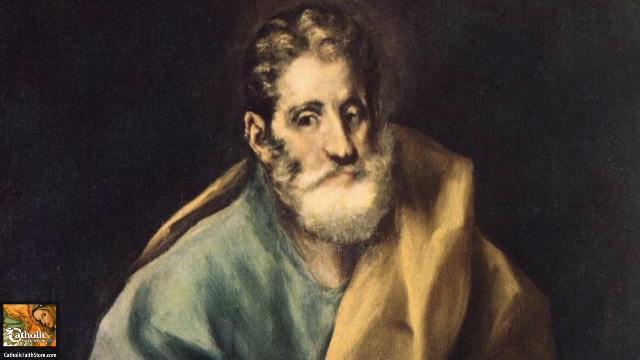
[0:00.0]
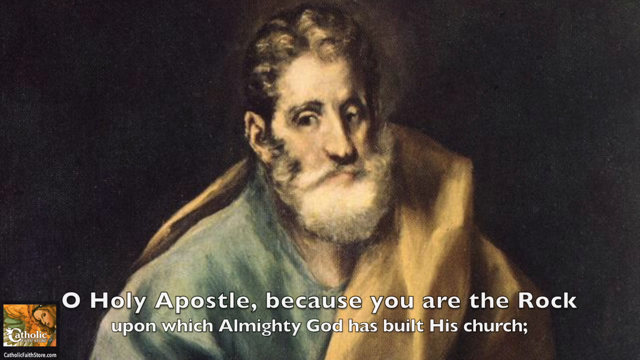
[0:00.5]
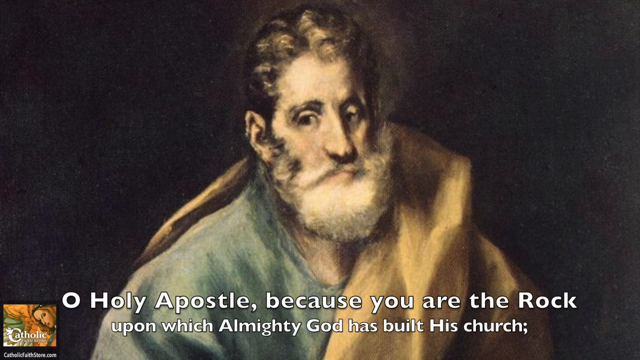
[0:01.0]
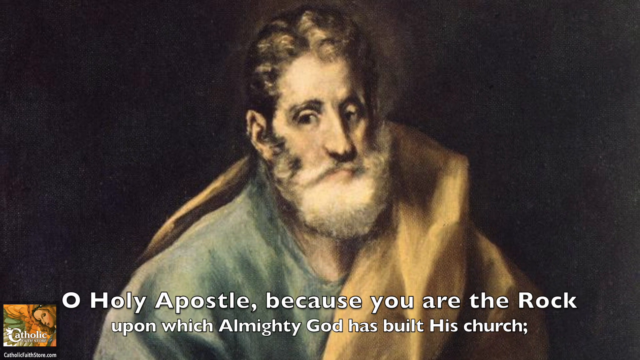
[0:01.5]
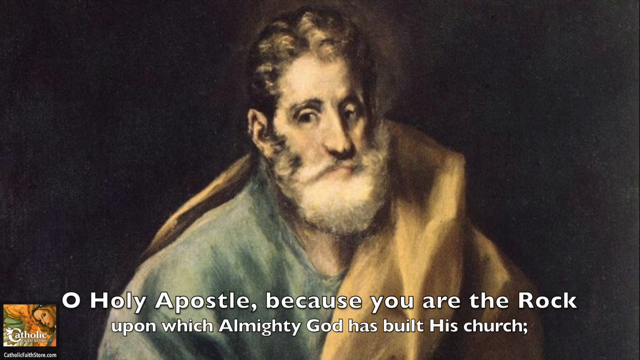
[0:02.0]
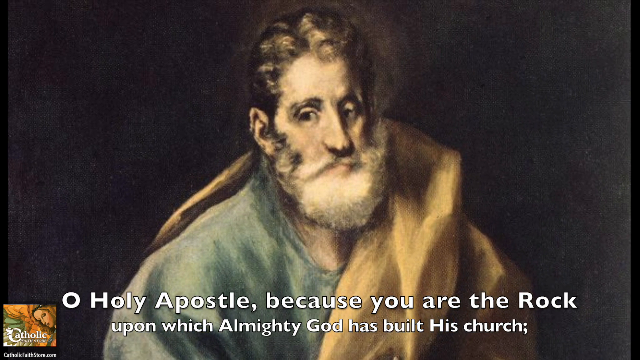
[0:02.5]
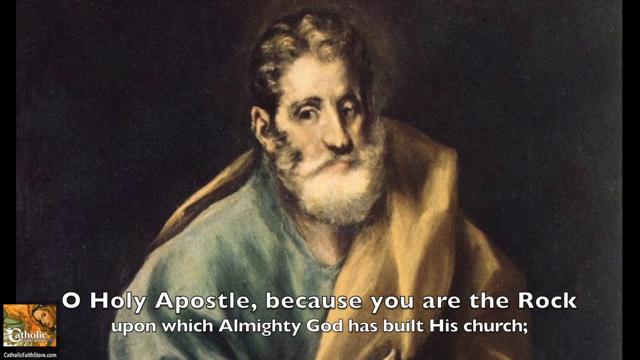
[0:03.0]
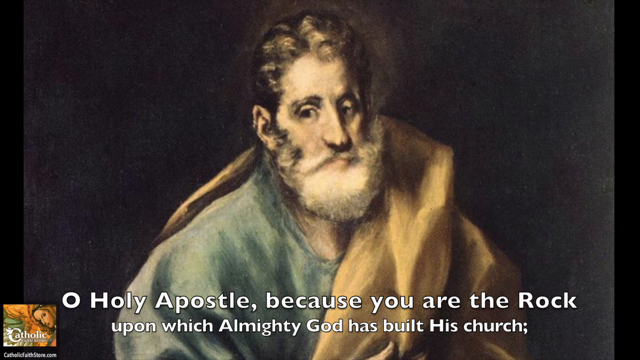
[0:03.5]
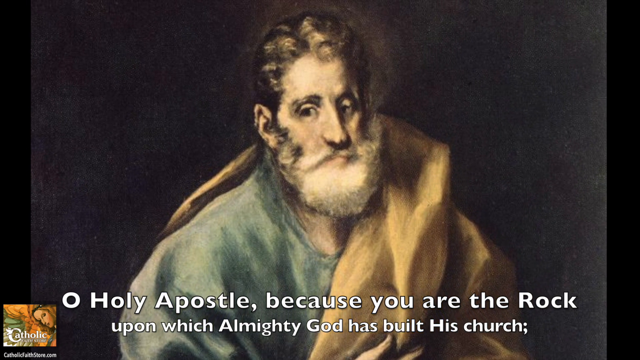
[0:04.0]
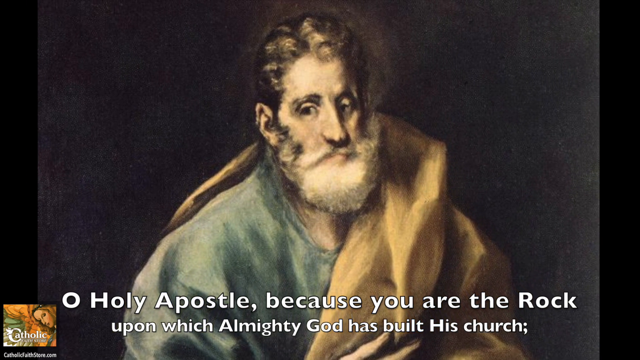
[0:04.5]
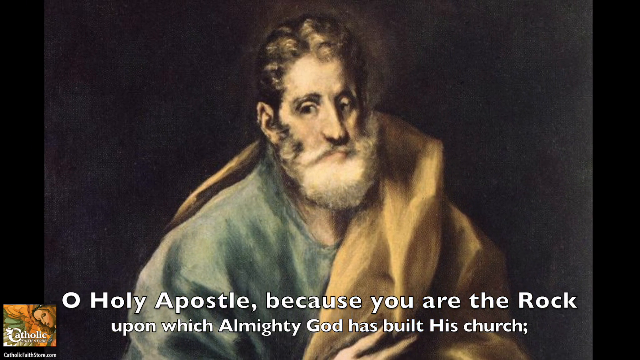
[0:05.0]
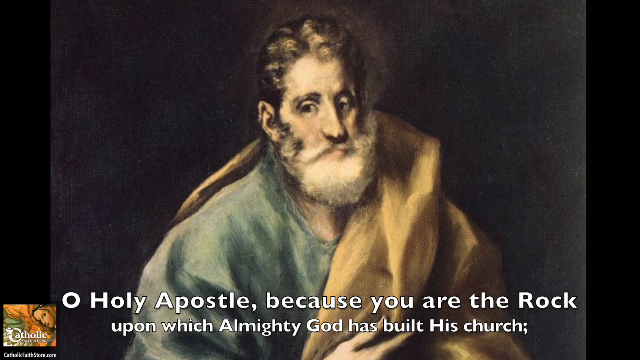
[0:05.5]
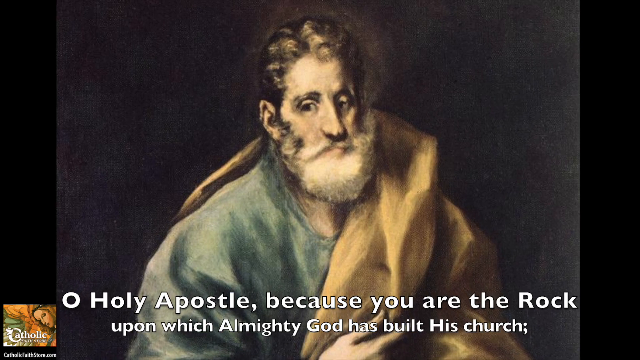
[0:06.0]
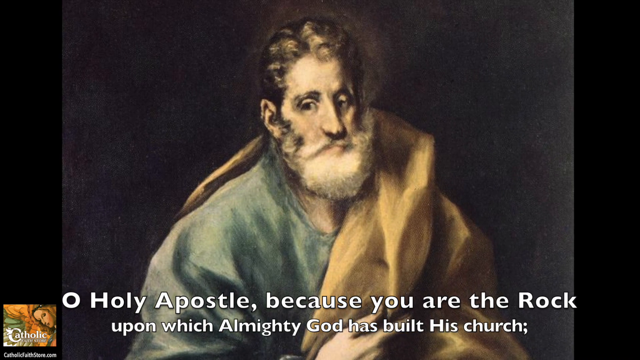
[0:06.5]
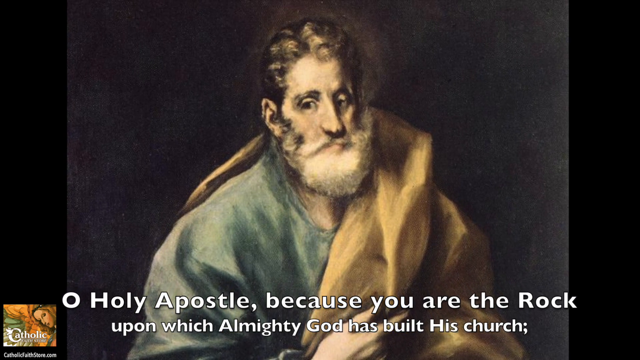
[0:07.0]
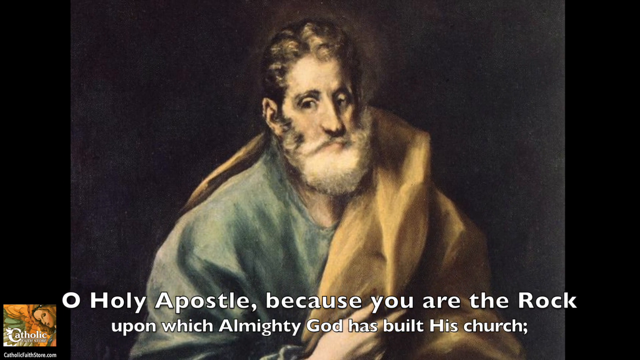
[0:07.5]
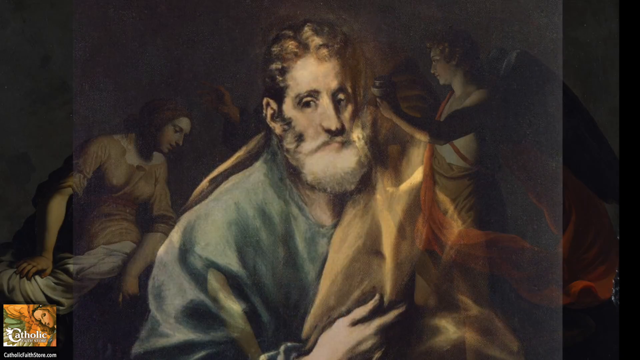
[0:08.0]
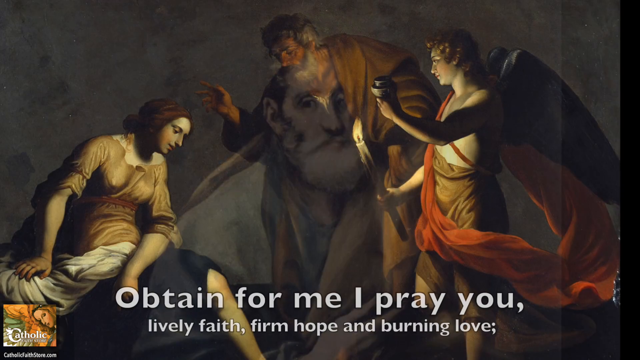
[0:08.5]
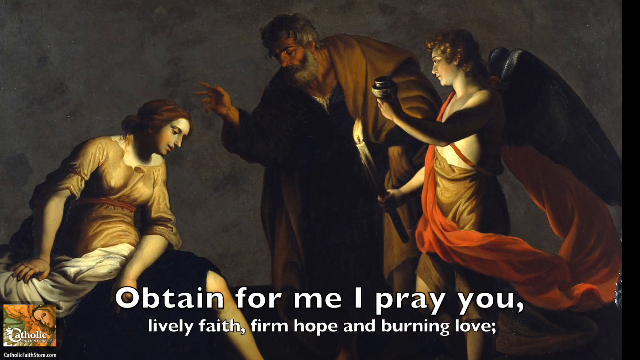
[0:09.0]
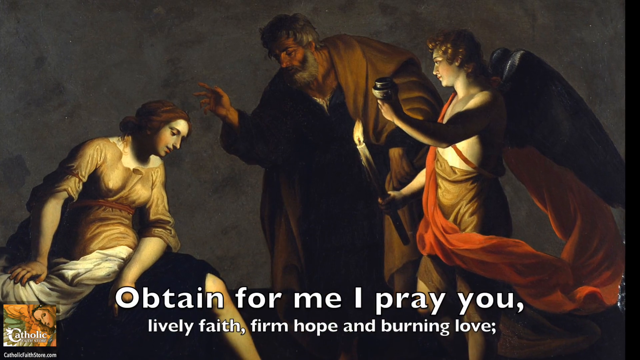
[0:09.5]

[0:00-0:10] The video begins with an illustration that looks like an old oil painting of a man, appearing very old. He wears a blue robe with something like a gold blanket over his left shoulder, has a beard, and looks sort of down and to his right. A quote in white text at the bottom reads, "Oh Holy Apostle, because you are the rock upon which Almighty God has built his church." The view slowly zooms out of the painting. In the lower left corner is a small inset illustration with the word "Catholic" on it in white text. A different painting appears, with text at the bottom reading, "obtained from me, I pray you, lively faith, firm hope, and burning love." In the middle is a man in a brown robe, hunched over a little to his right and holding up his right hand. A woman to his right is sitting and leaning towards his hand.